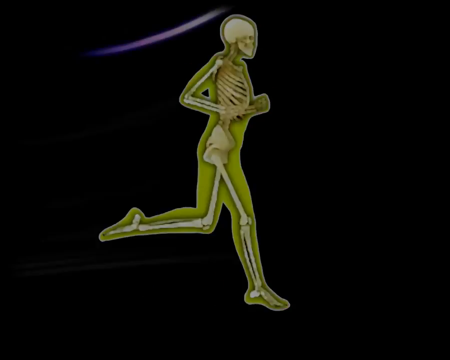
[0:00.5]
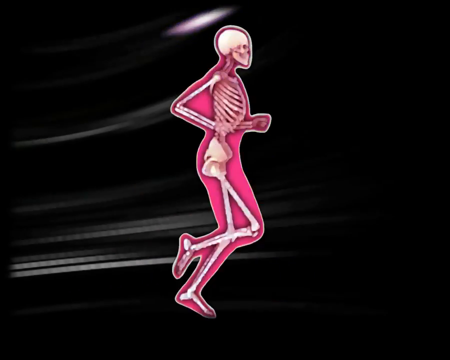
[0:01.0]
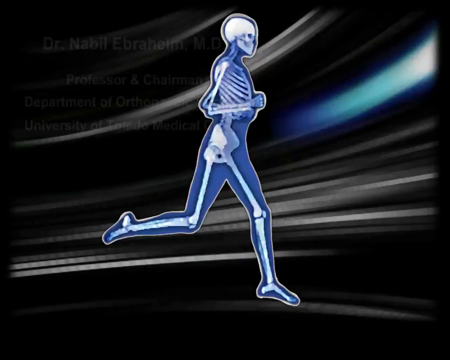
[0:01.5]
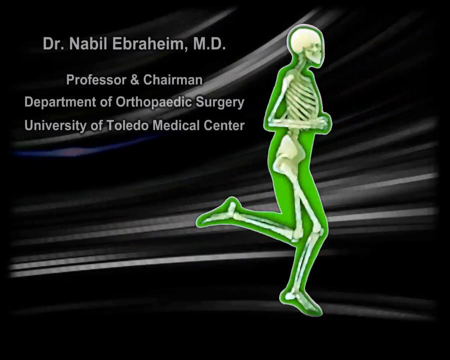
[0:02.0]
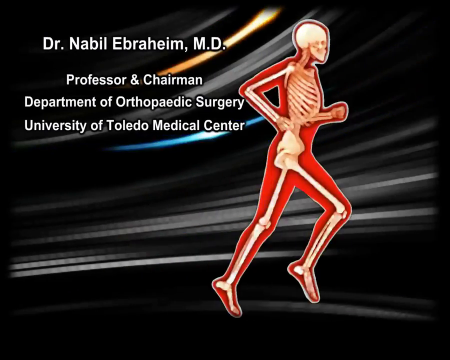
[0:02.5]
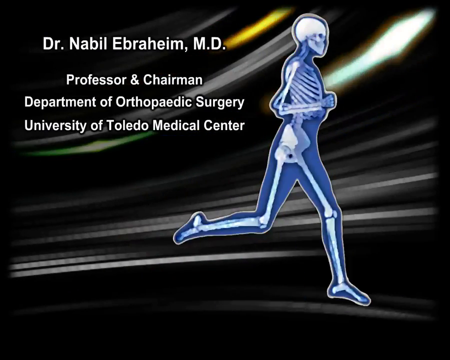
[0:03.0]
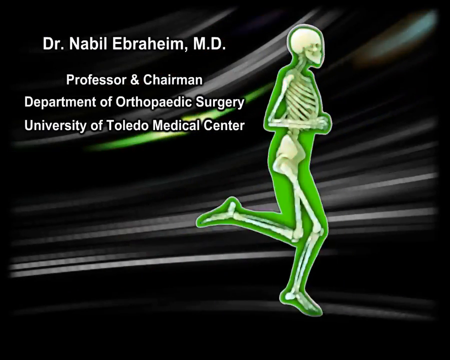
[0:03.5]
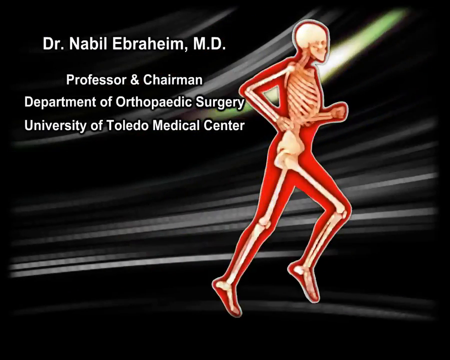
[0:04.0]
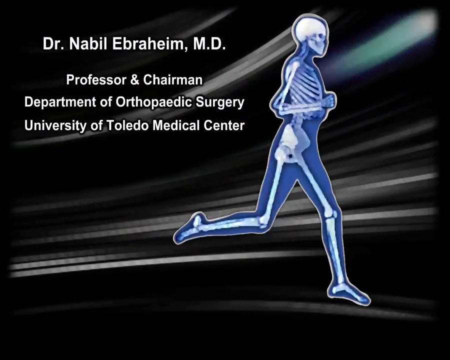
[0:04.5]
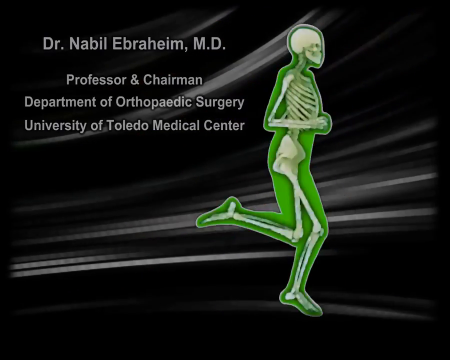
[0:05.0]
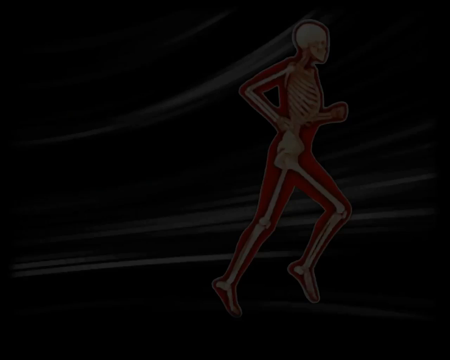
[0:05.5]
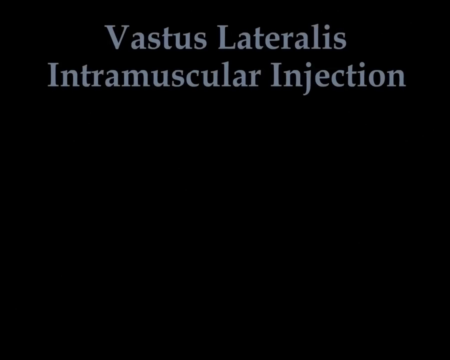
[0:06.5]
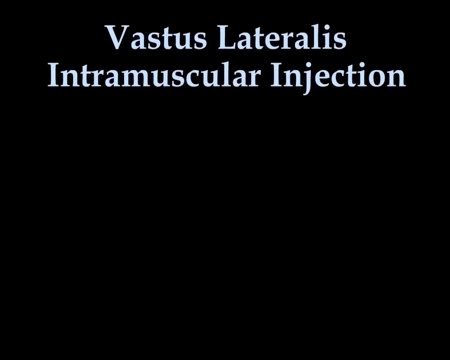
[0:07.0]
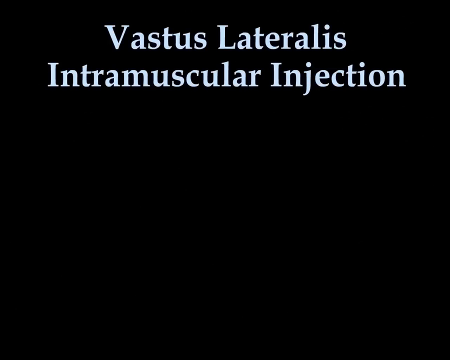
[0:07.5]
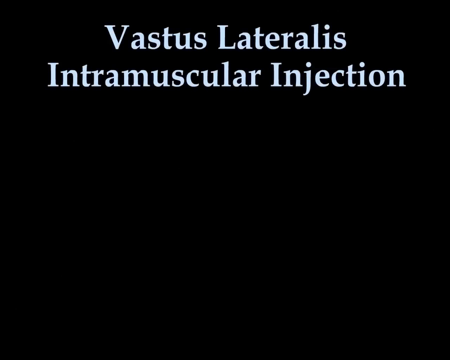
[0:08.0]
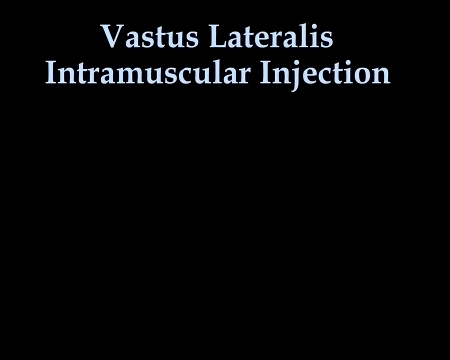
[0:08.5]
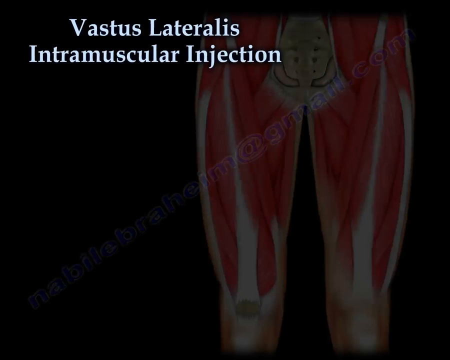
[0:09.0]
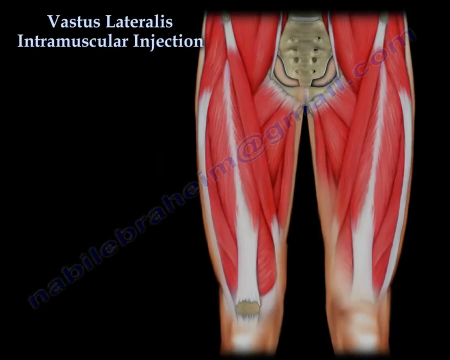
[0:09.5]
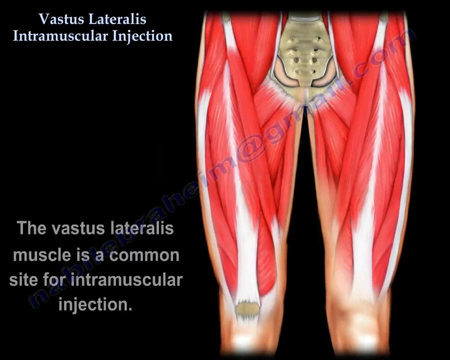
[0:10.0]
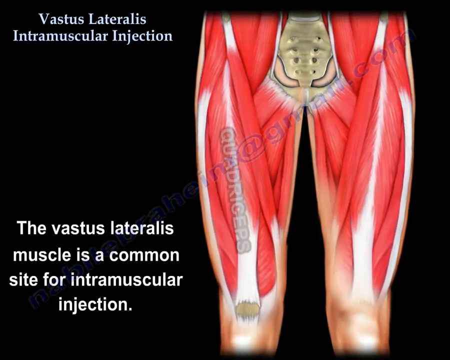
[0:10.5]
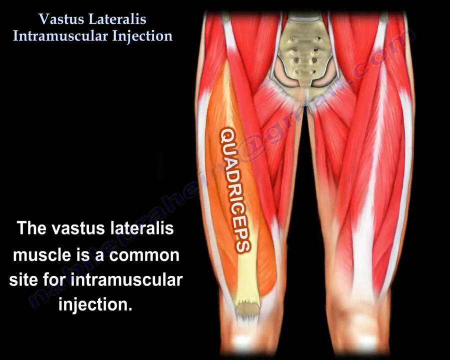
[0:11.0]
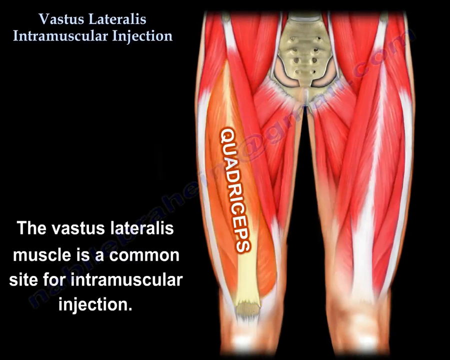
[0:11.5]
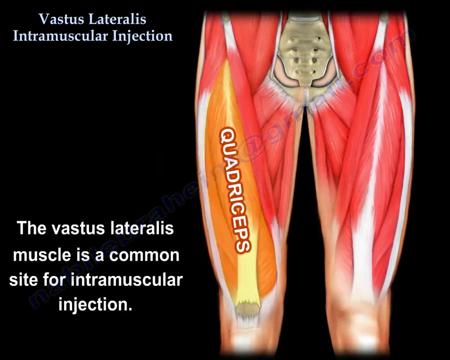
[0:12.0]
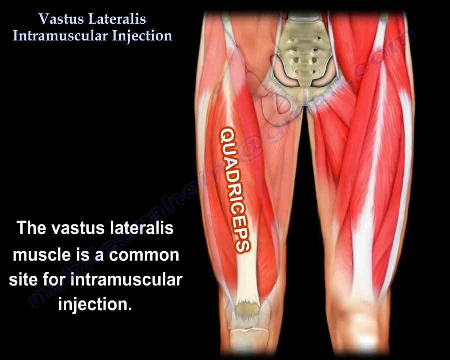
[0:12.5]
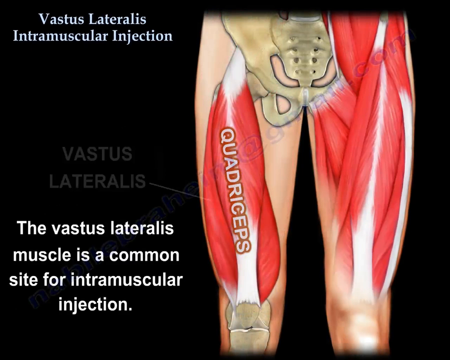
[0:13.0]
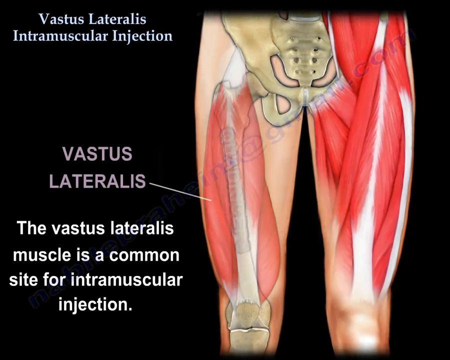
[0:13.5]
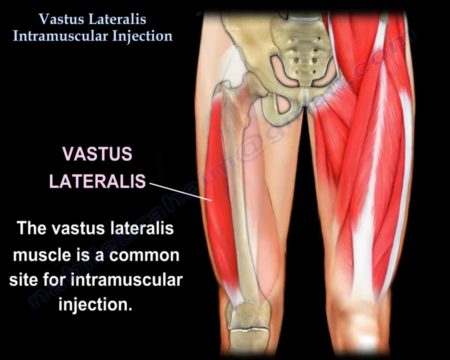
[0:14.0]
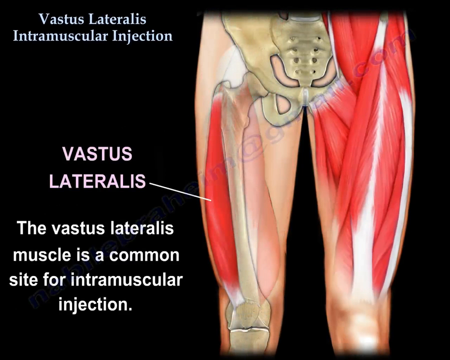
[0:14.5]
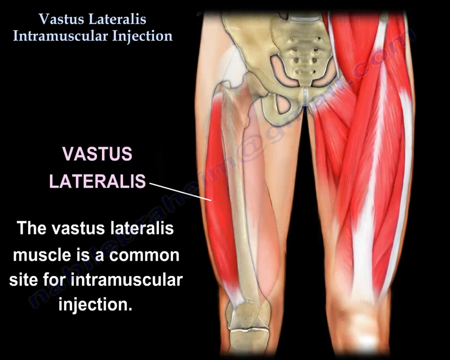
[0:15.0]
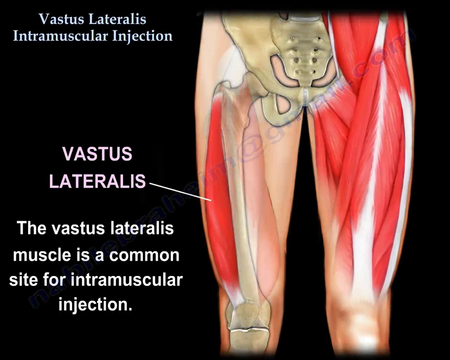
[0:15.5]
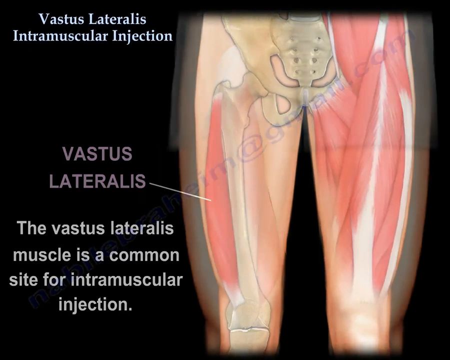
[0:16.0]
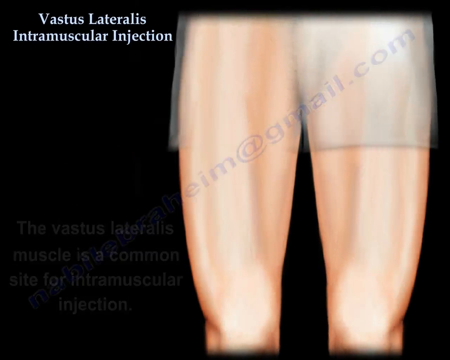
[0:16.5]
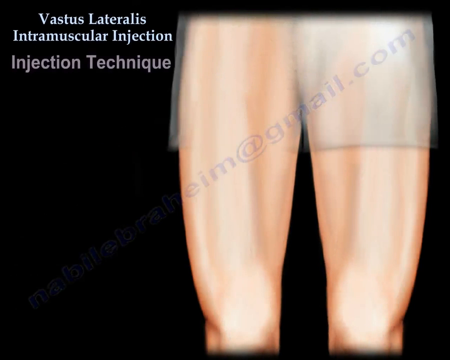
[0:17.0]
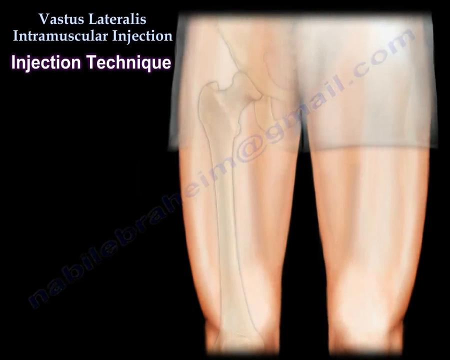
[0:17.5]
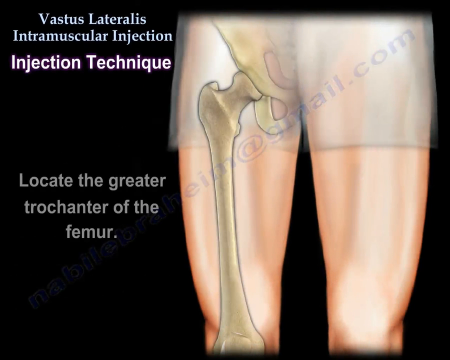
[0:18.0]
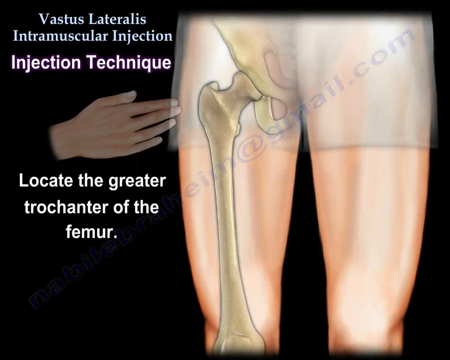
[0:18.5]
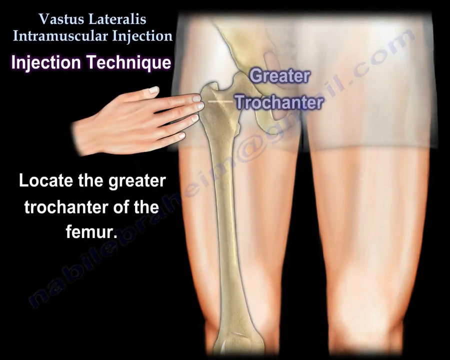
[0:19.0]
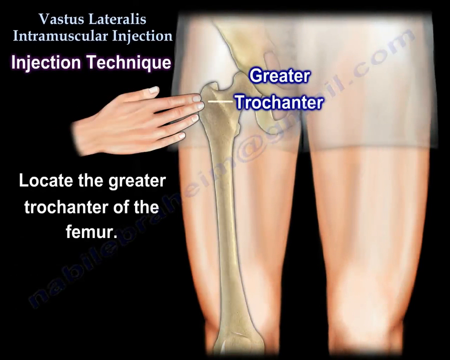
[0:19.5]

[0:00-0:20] An animated skeleton runs across the screen. The background is visible before the skeleton is enveloped in a pink silhouette representing the skeleton inside a human body. What looks to be a wisp of wind moves from the left side to the right side of the screen across the black background. In the top left corner, white text reads "Dr. Mabel Abraham, MD", under that "professor and chairman", under that "Department of Orthopedic Surgery", and under that "University of Toledo Medical Center". The video then switches to a presentation. In the top left corner, text reads "Vastus Lateralis Intramuscular Injection". A front view of the muscles and bones of a person's body appears. In the bottom left, text reads "Vastus Lateralis Muscle is a common site for intramuscular injection". An arrow then points to the right thigh, labeled "vastus lateralis".